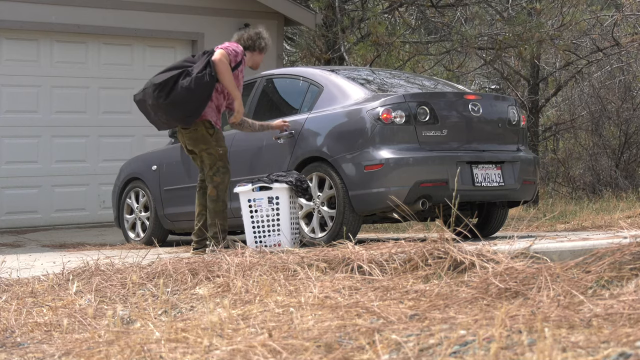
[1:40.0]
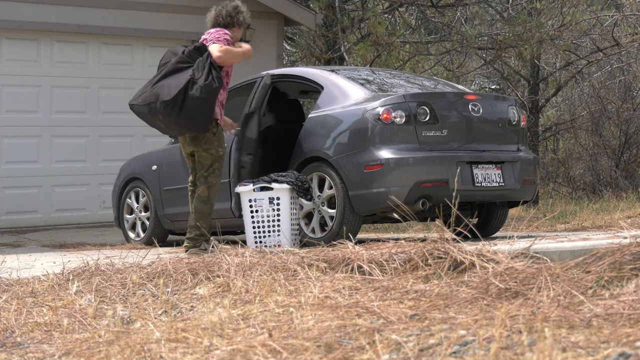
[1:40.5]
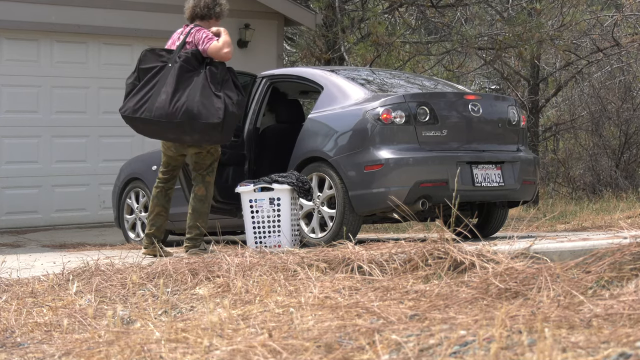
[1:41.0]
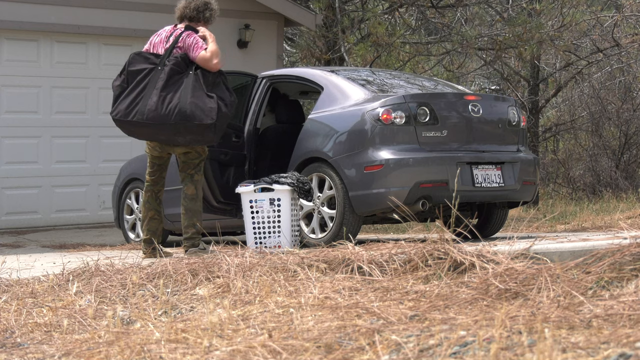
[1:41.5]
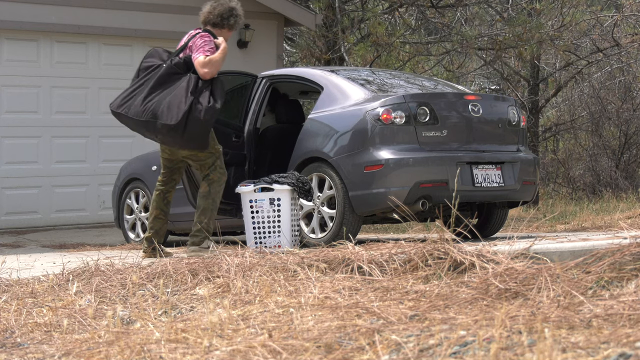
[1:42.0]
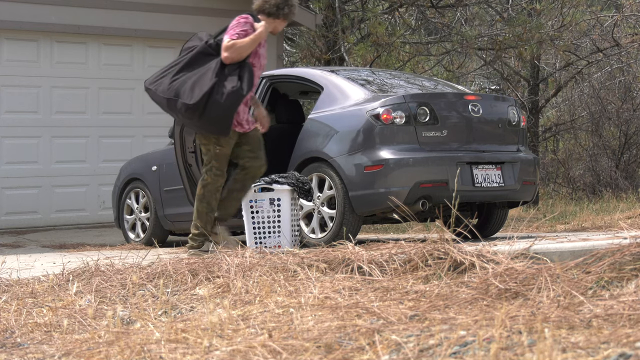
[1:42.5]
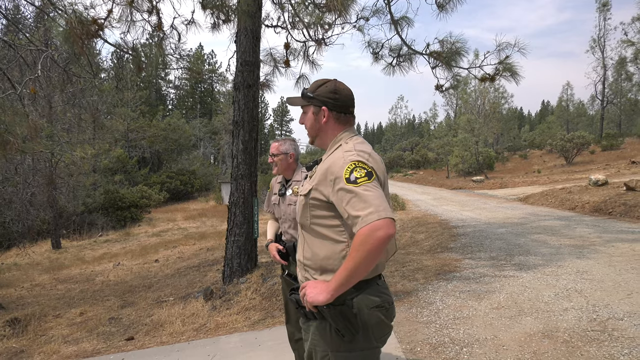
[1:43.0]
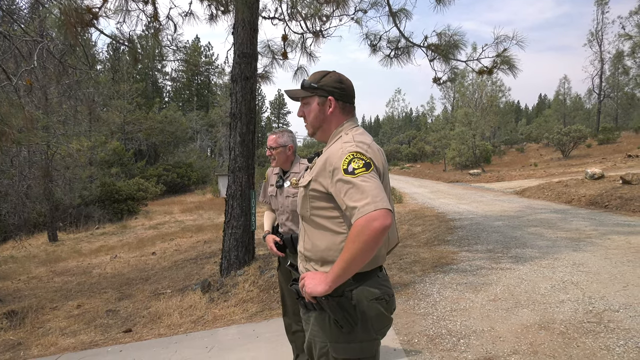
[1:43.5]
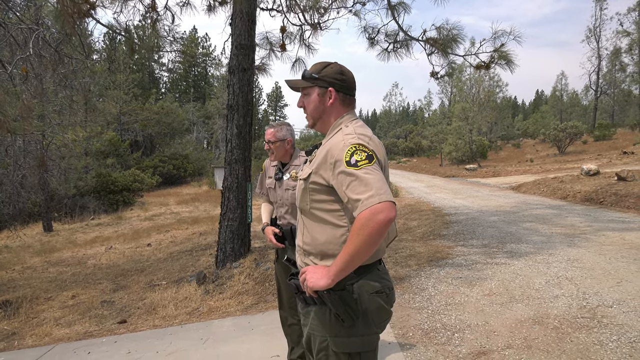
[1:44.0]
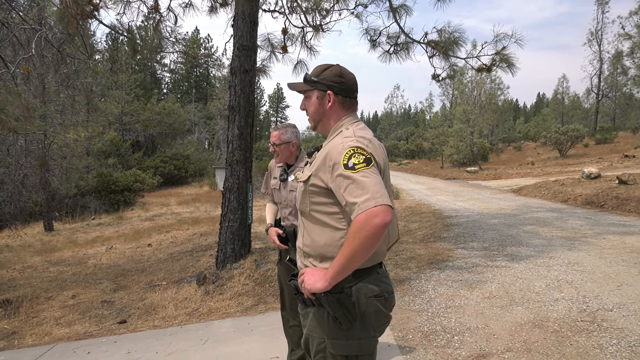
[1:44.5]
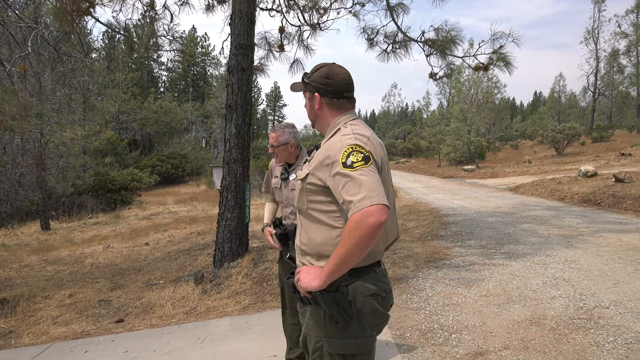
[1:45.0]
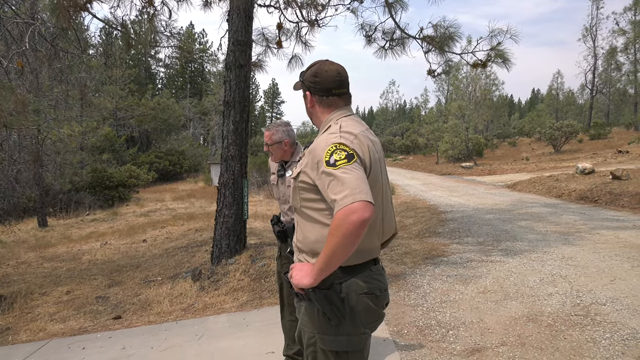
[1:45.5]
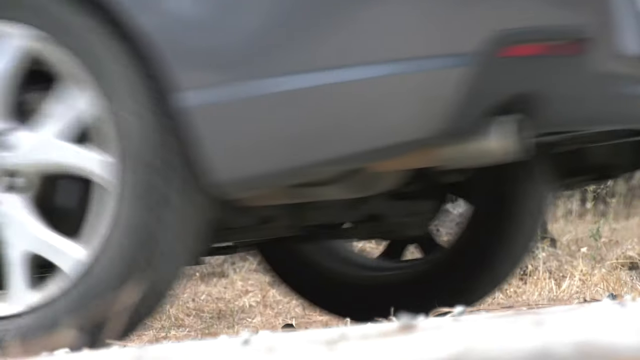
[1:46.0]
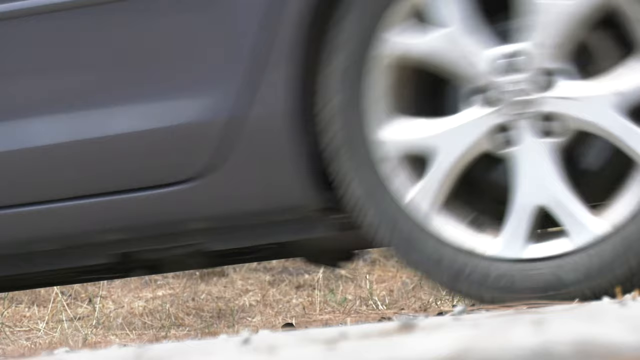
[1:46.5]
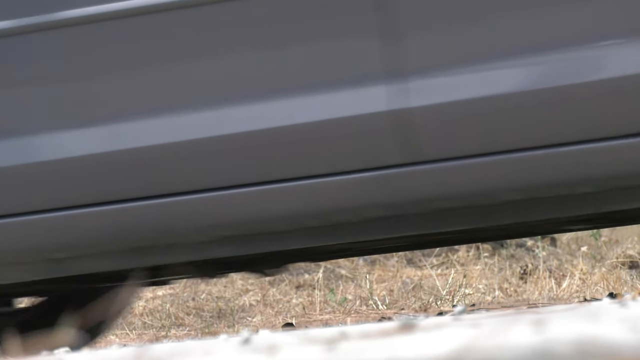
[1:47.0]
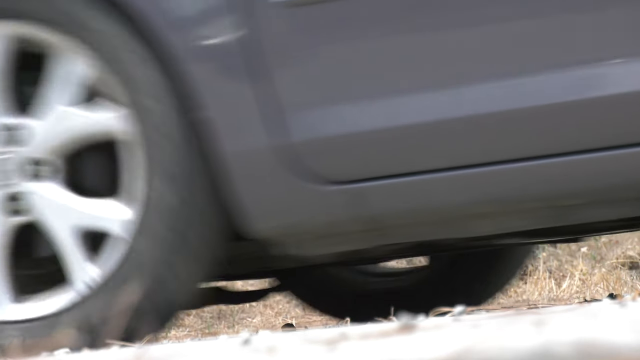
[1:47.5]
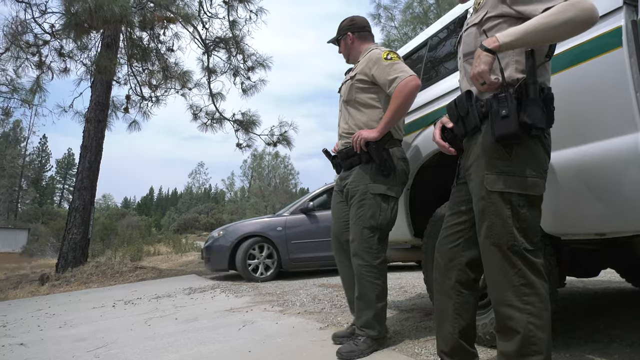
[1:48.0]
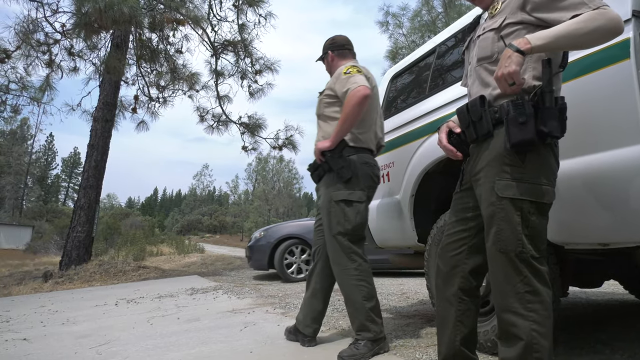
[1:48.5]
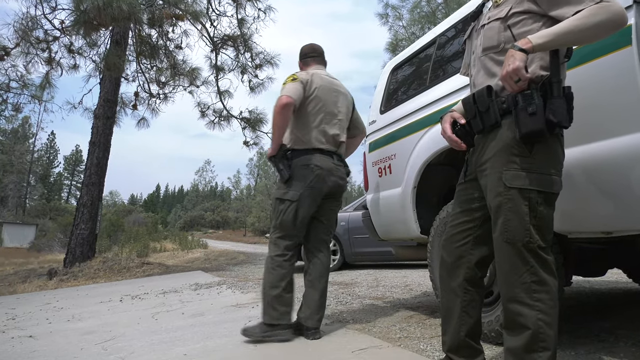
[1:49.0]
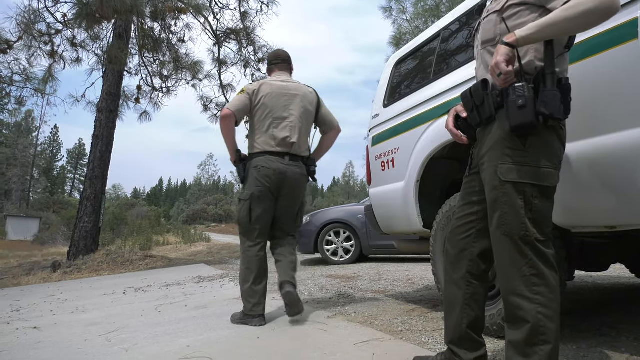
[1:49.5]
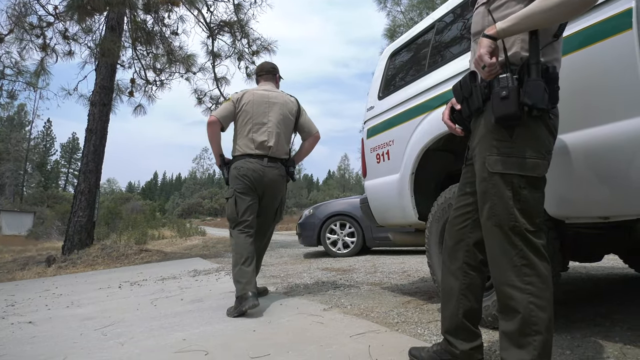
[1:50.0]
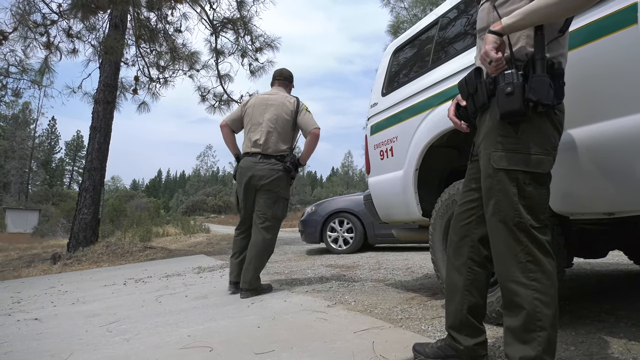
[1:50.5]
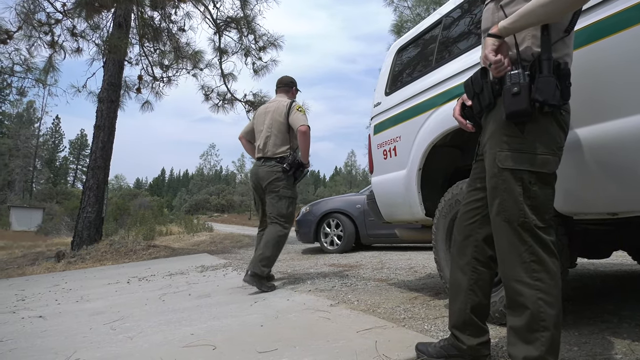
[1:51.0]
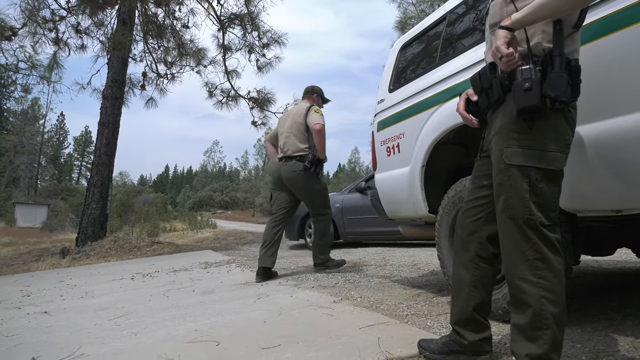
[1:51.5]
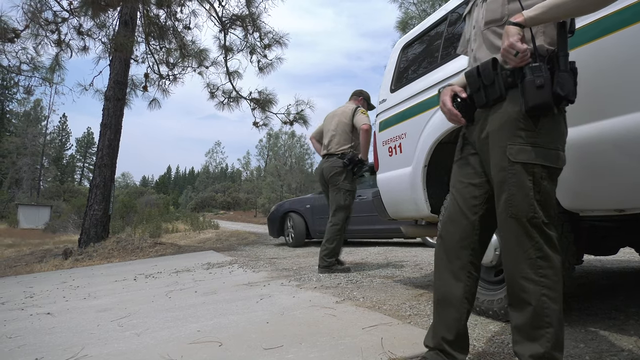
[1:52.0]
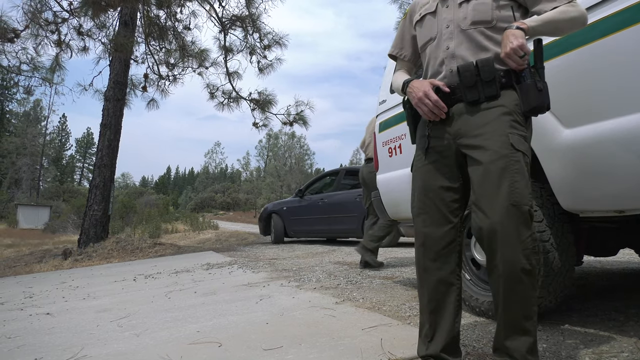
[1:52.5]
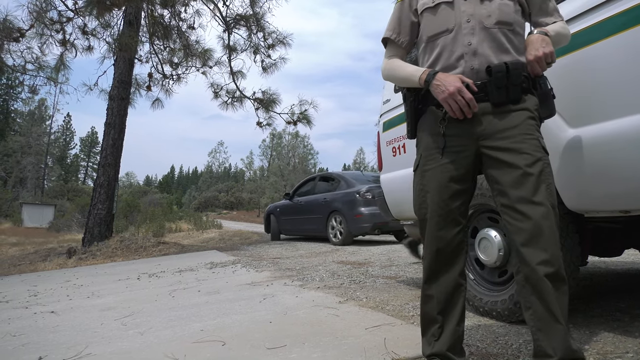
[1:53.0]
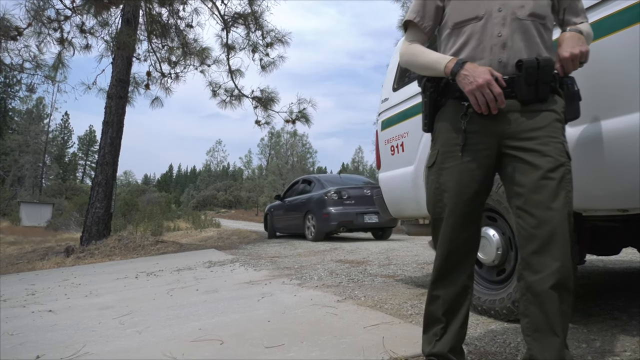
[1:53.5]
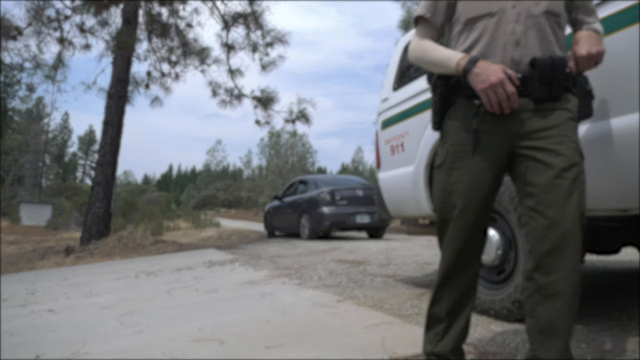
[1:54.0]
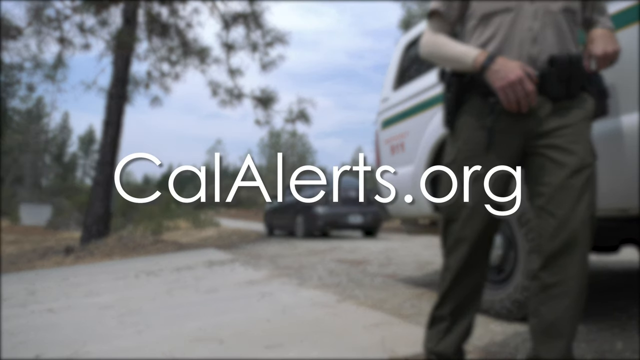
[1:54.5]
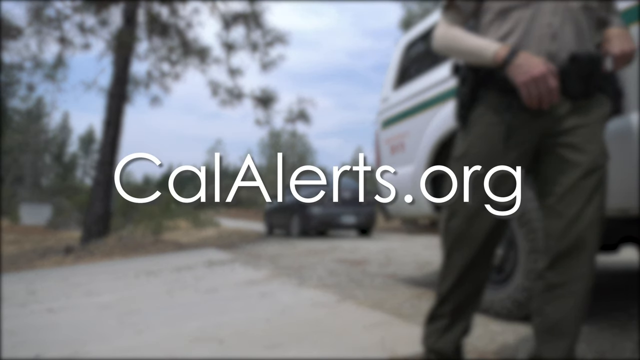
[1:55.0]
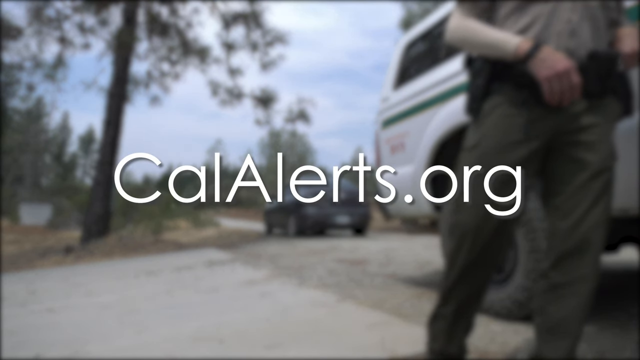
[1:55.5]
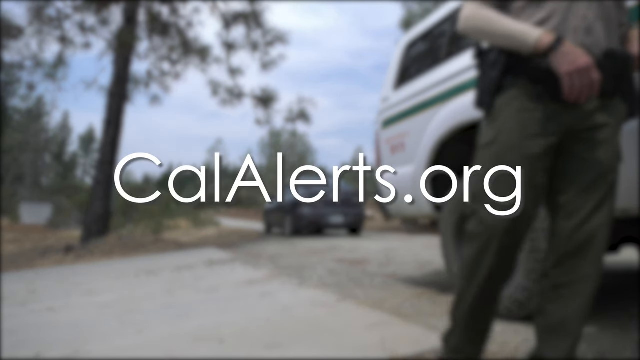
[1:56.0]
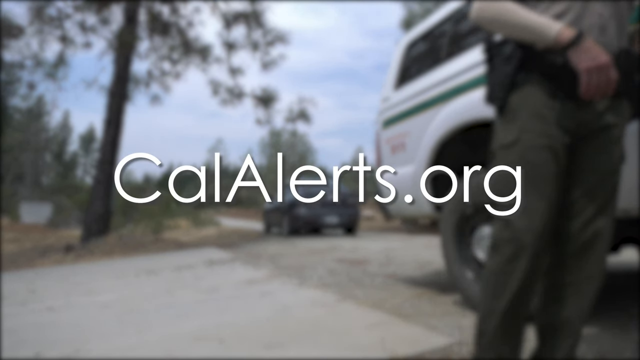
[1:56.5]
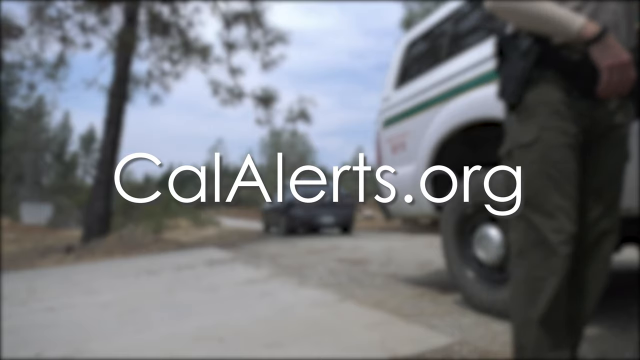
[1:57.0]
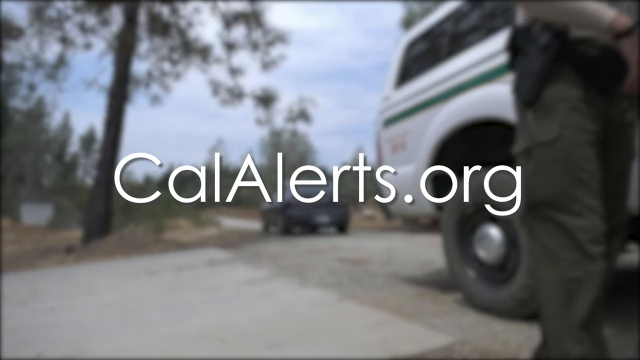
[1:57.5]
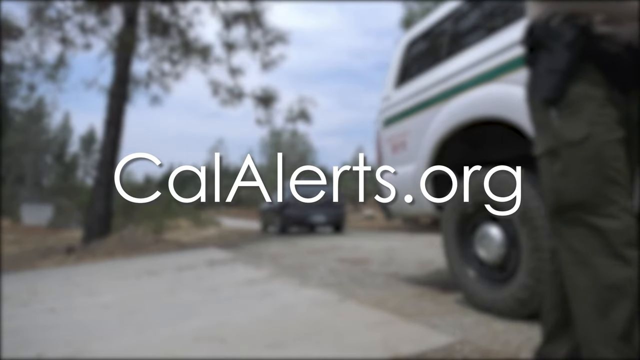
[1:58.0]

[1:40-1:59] The sheriffs are knocking door to door, house to house. Apparently only one man has been left behind. He looks like he is in his late 20s or early 30s, is light-skinned and has spiral curly hair. He carries just a bag, gets into his car and leaves.